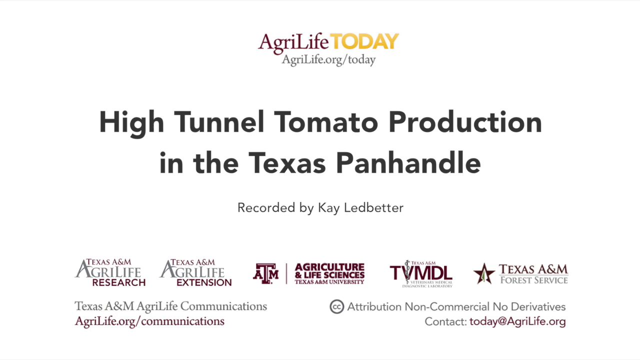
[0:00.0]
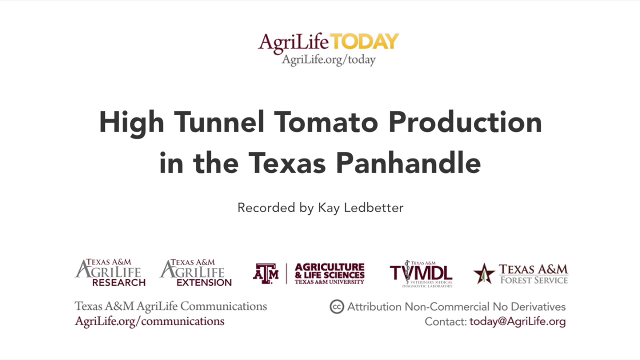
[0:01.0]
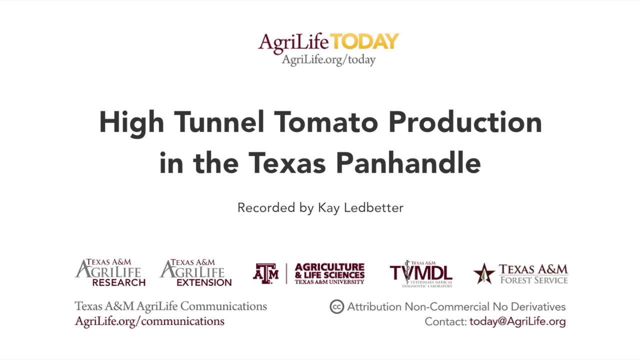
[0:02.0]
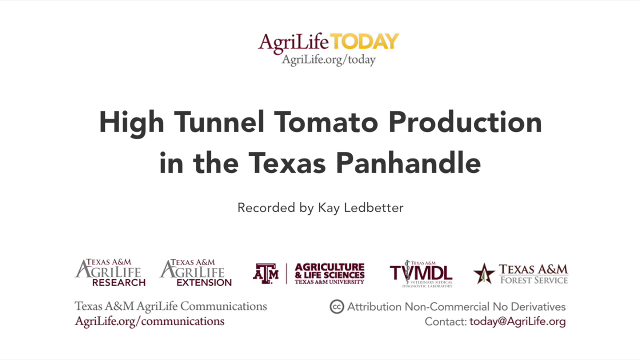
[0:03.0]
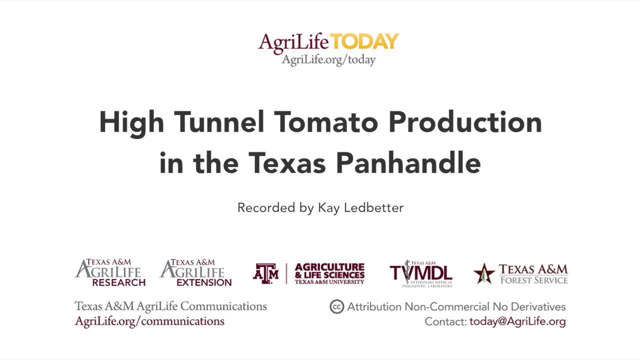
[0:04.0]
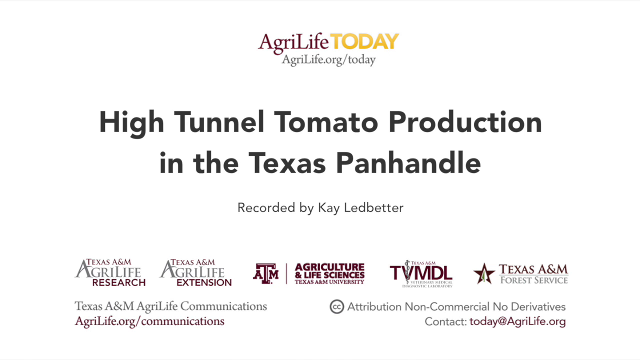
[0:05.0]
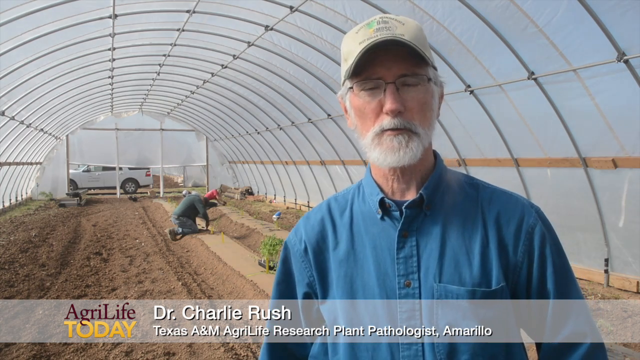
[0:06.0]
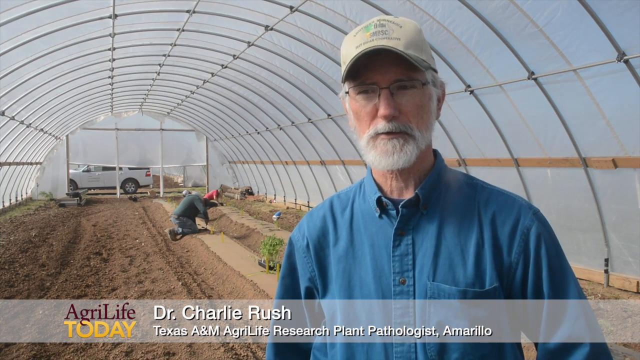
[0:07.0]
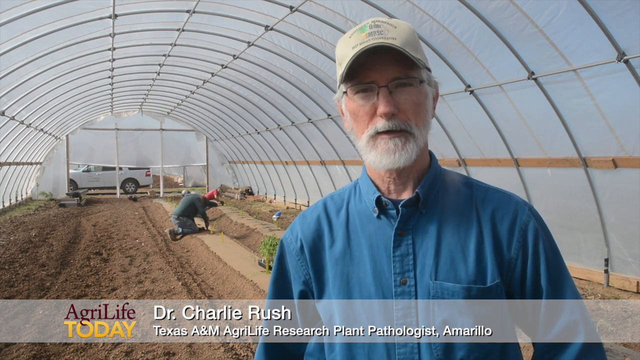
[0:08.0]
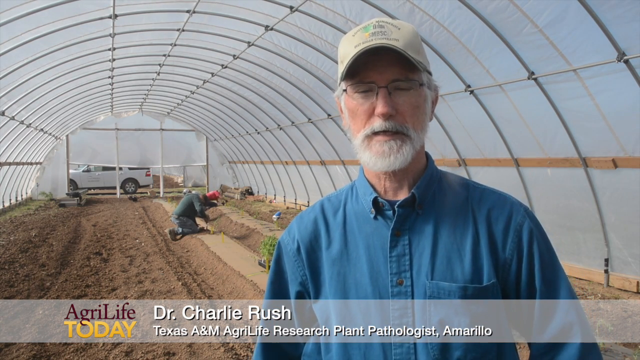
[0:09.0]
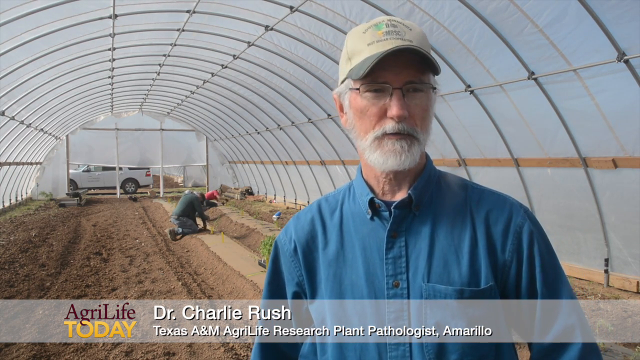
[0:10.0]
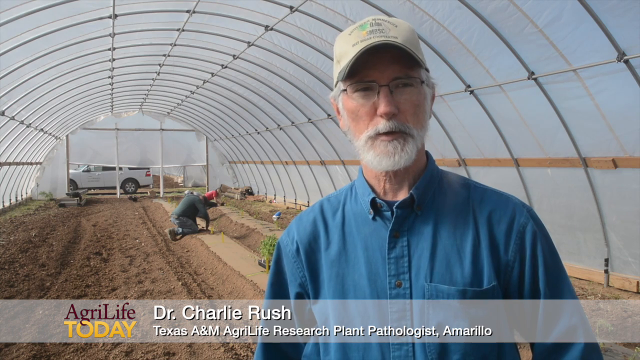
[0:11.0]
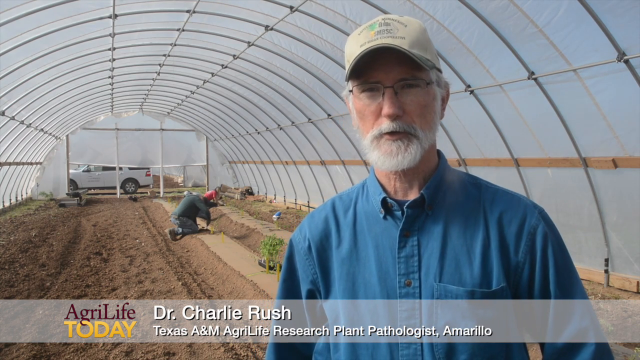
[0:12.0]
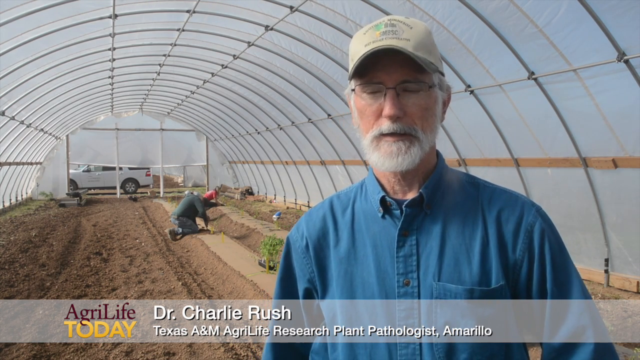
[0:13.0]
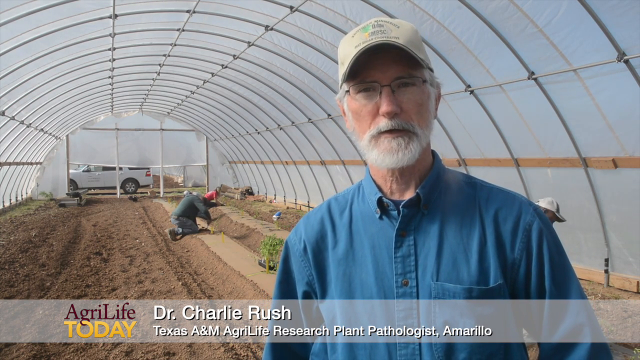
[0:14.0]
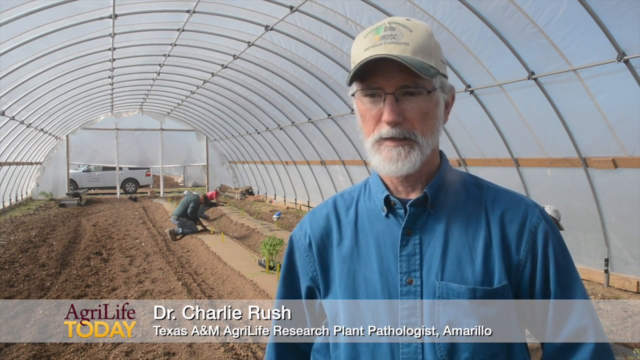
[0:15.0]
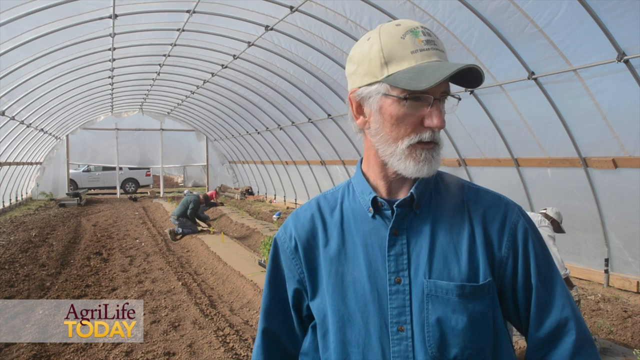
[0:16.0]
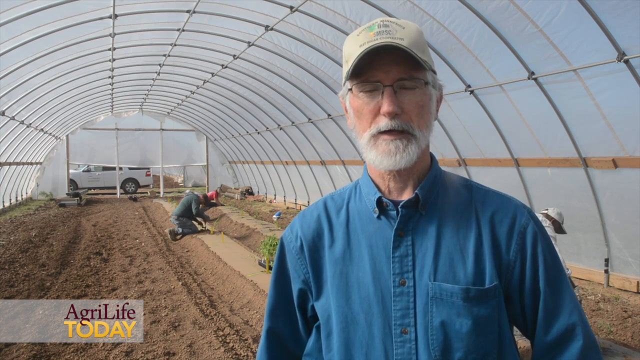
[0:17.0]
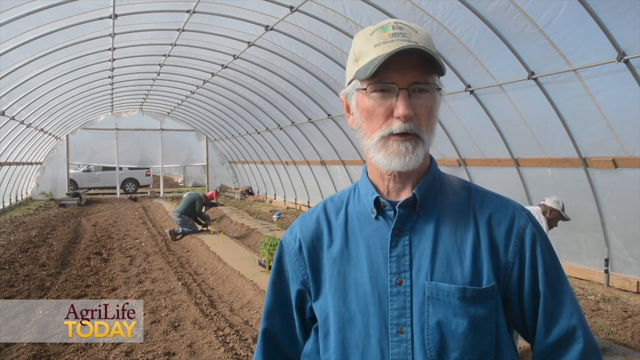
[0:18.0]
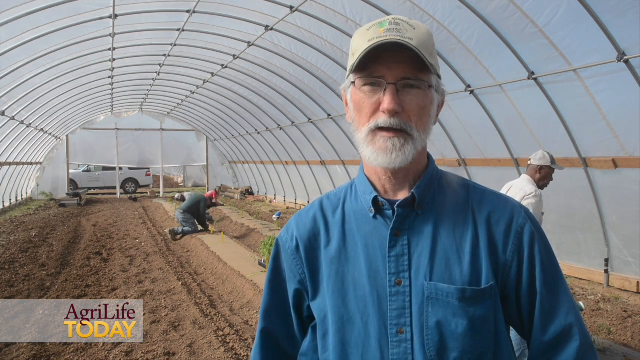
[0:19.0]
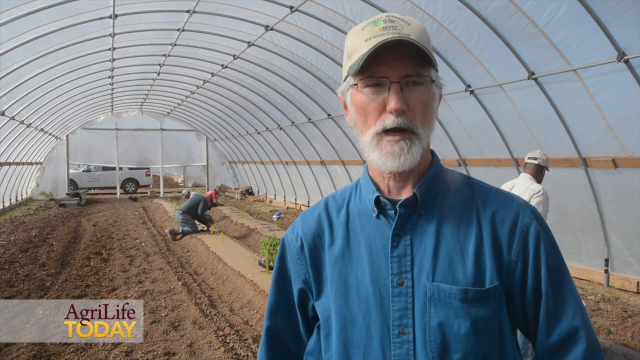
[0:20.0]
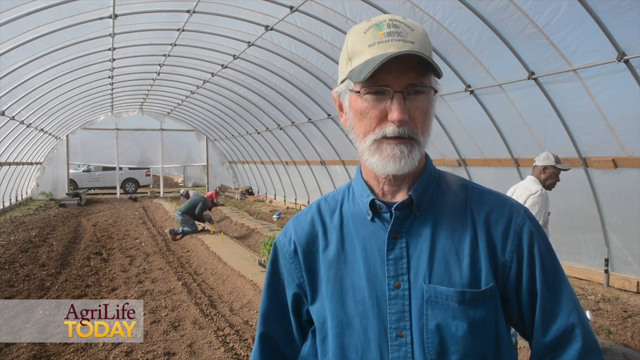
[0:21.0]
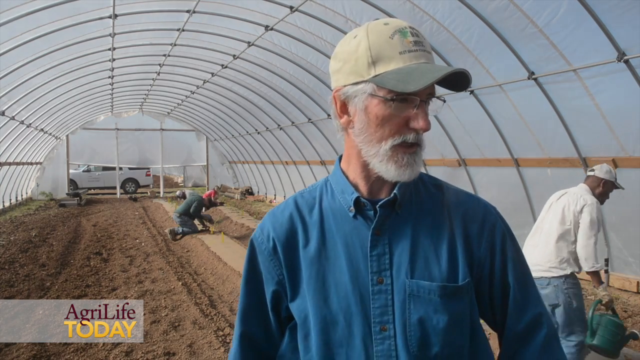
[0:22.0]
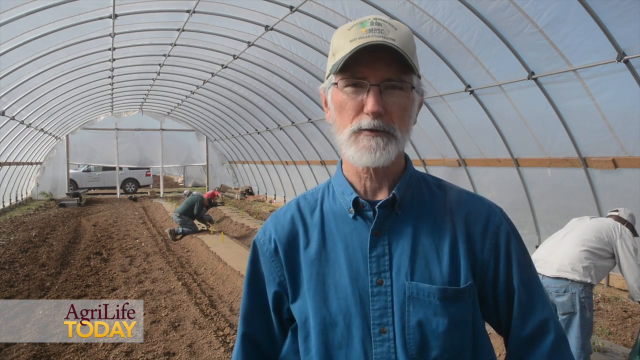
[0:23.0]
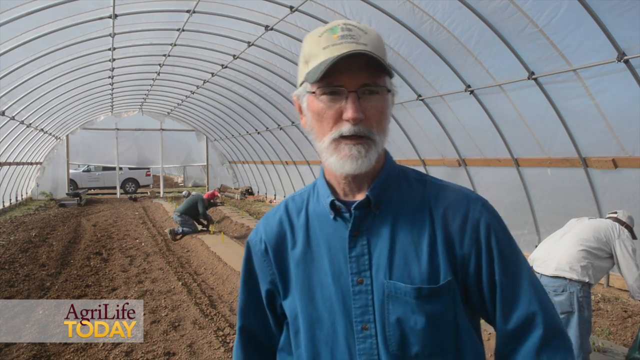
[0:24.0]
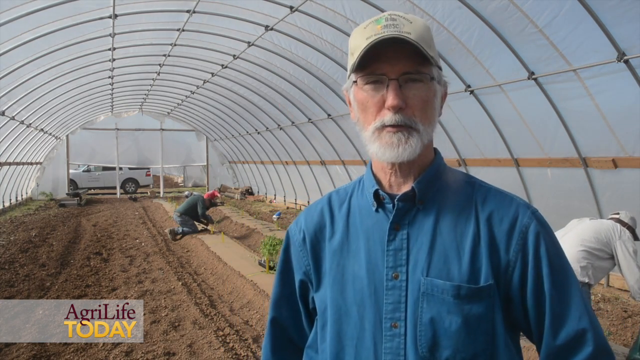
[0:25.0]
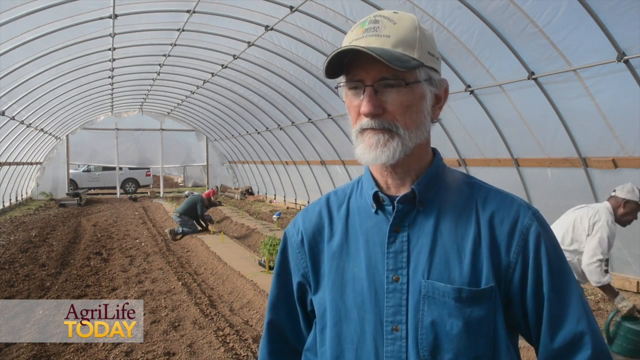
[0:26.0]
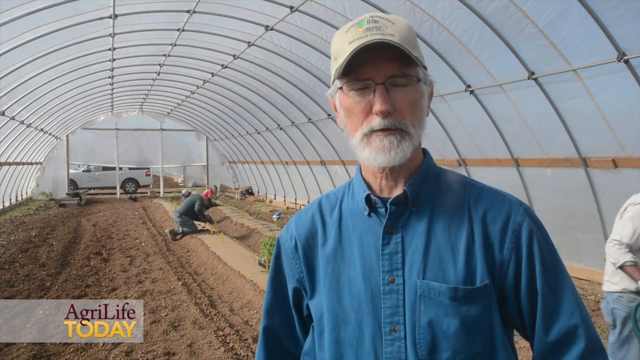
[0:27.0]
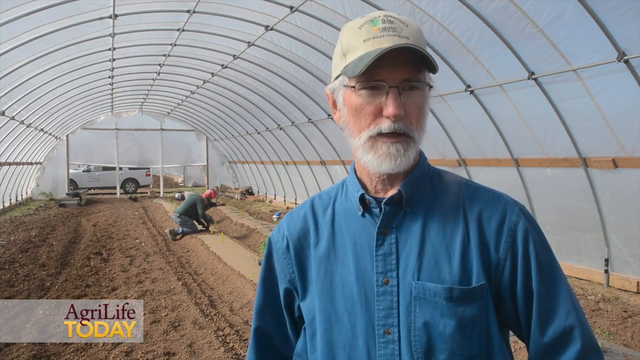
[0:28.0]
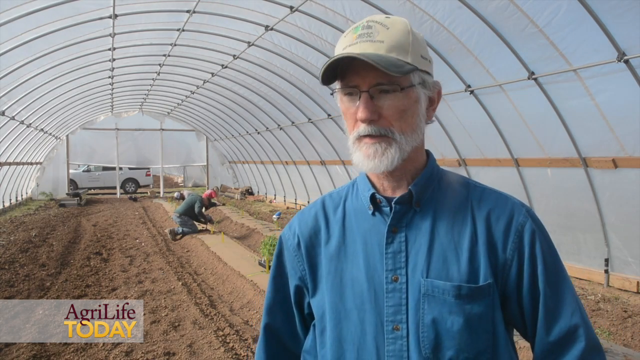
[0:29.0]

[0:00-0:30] The video opens on a screen of text. At the top is "AgriLife Today": "AgriLife" is in purple and spelled A-G-R-I-L-I-F-E, and "Today" is in orange capital letters. Underneath is "AgriLife.org/today", below that "High Tunnel Tomato Production in the Texas Panhandle", and below that "recorded by Kay Ledbetter". Beneath this are many logos: AgriLife Research, AgriLife Extension, ATM, Agriculture and Life Sciences, TBMDL, and Texas A&M Forest Service. The video then moves to a man standing inside a greenhouse. He is an older man with a white beard, a baseball cap and glasses, and he wears a blue shirt unbuttoned at the top. He is very close up in the shot and appears to be speaking to the cameraman. In the distance, somebody is working in the dirt in the greenhouse, perhaps planting. There are only two people in the greenhouse.